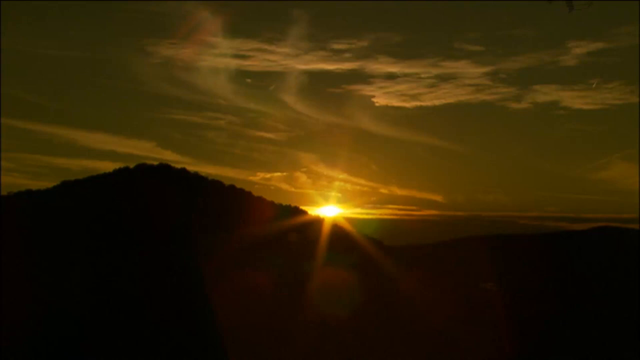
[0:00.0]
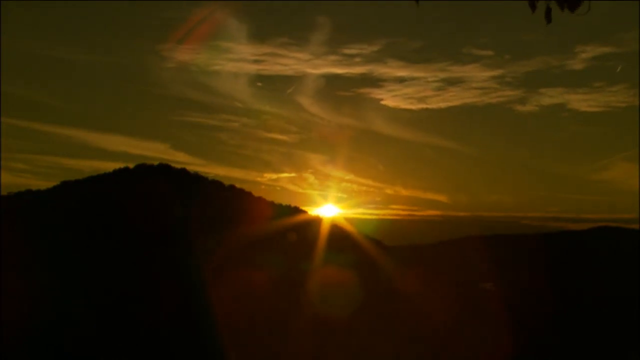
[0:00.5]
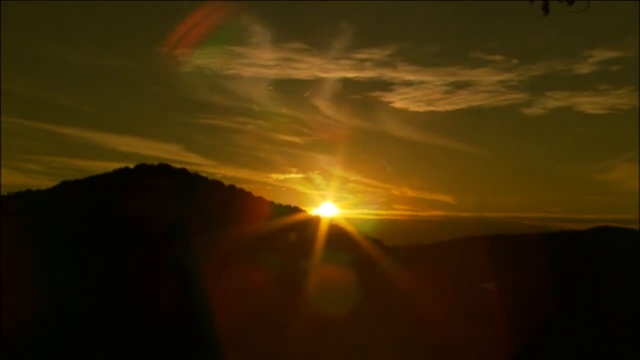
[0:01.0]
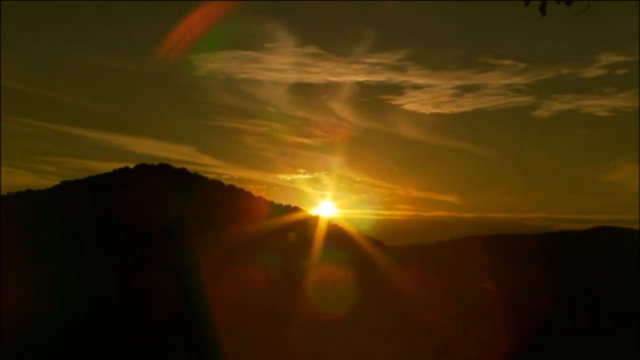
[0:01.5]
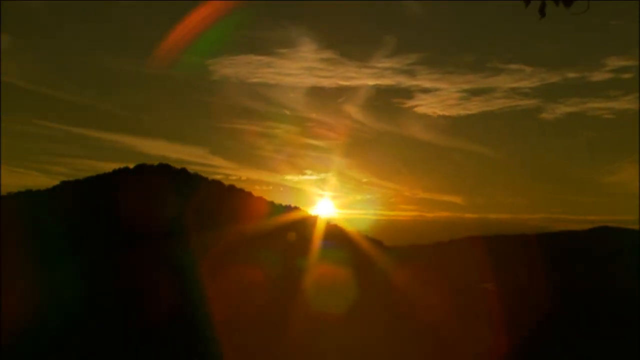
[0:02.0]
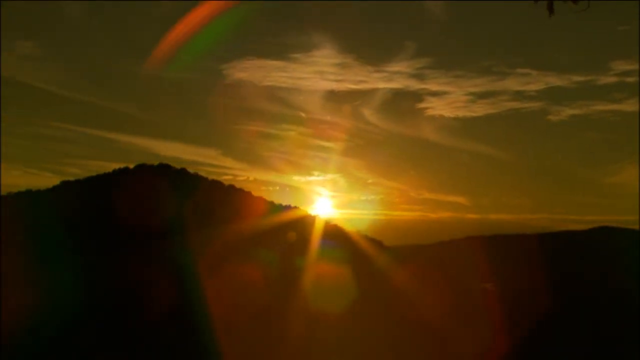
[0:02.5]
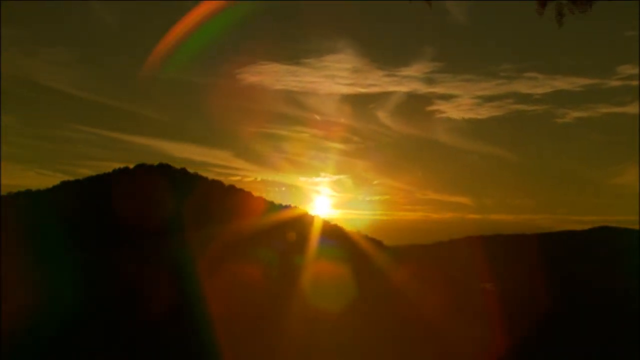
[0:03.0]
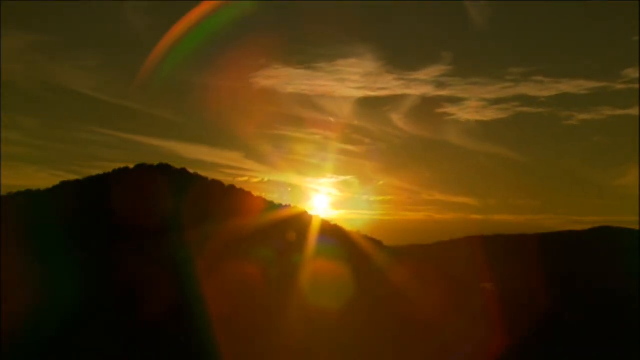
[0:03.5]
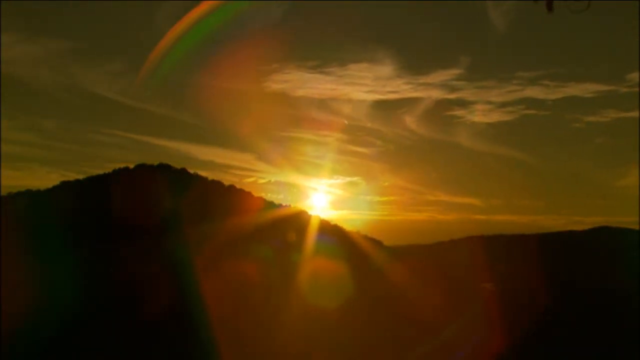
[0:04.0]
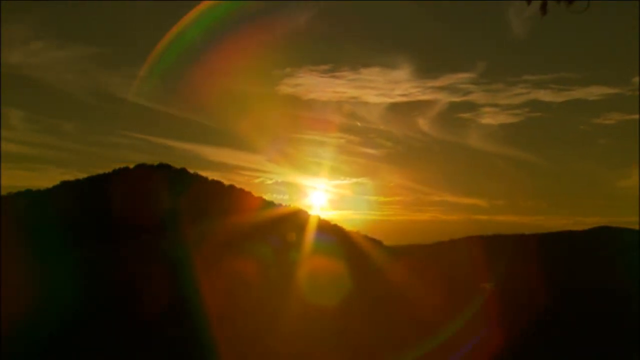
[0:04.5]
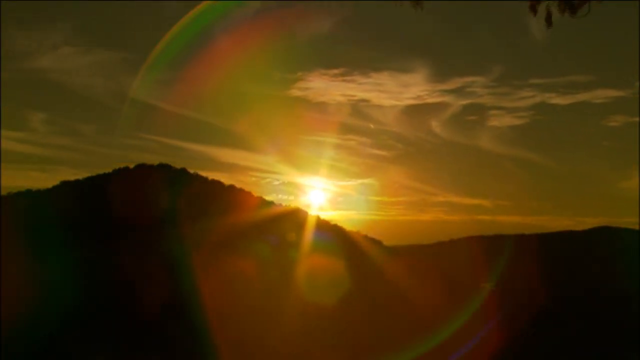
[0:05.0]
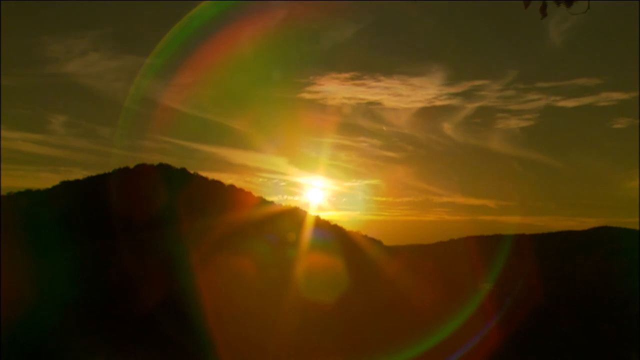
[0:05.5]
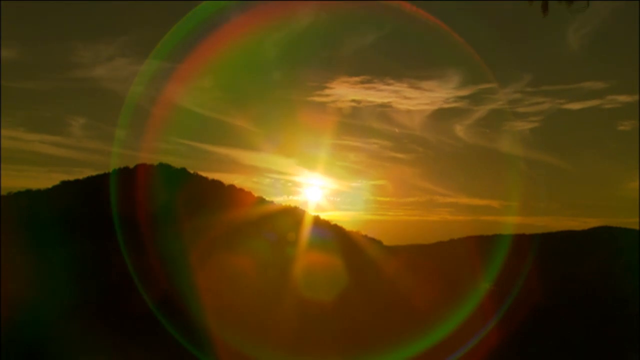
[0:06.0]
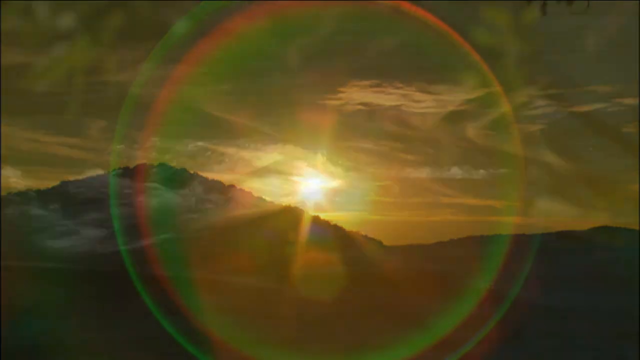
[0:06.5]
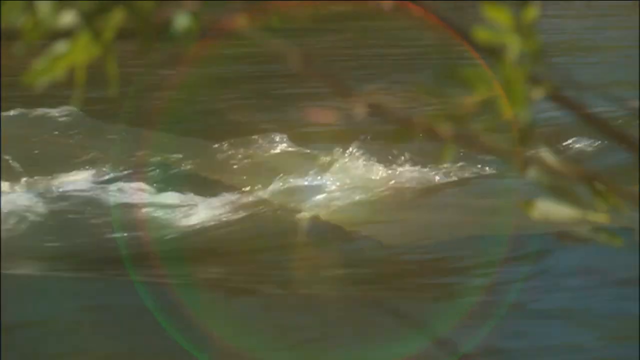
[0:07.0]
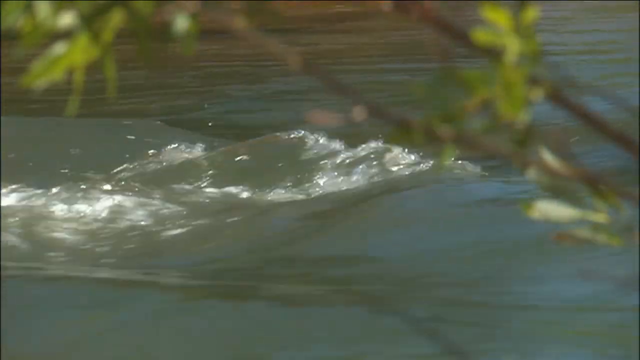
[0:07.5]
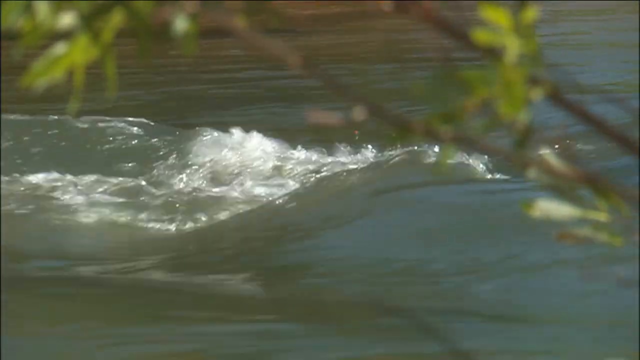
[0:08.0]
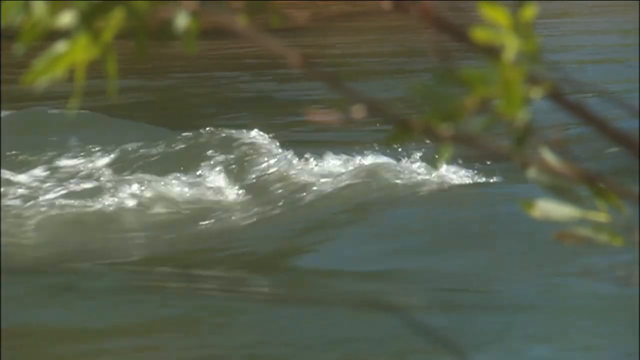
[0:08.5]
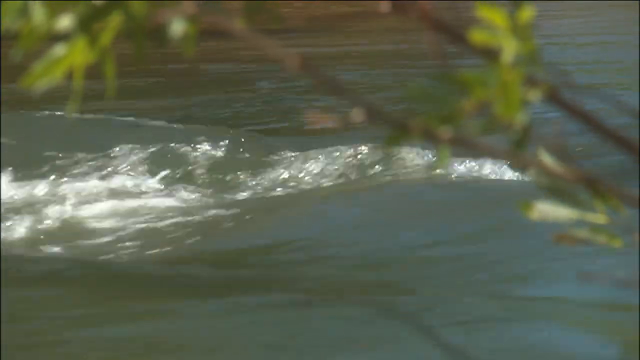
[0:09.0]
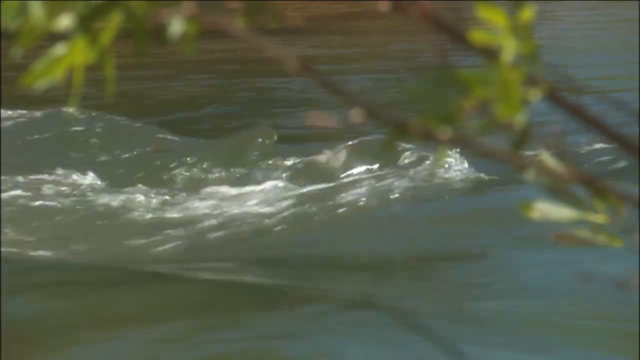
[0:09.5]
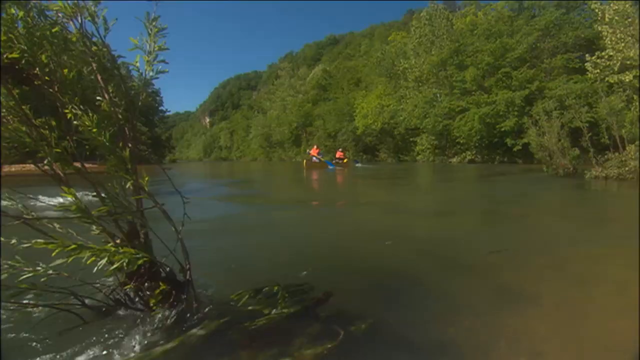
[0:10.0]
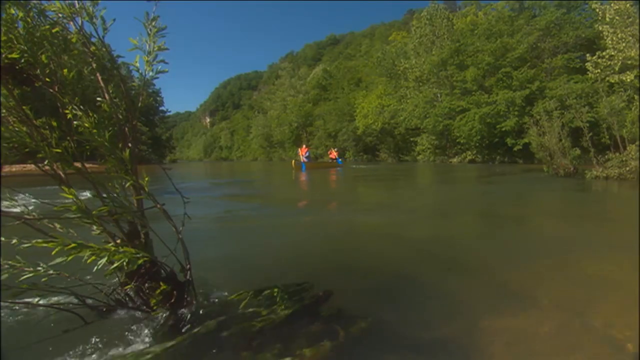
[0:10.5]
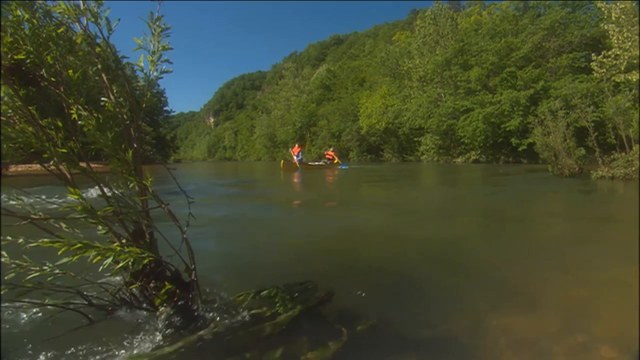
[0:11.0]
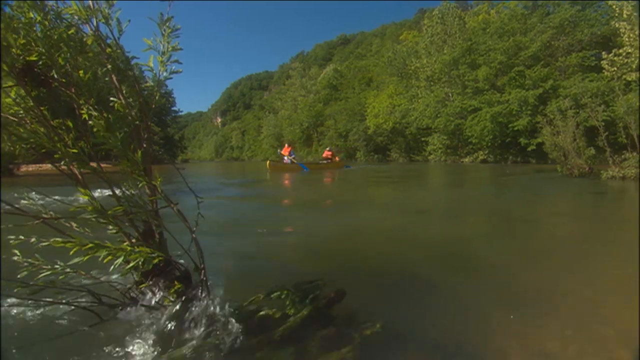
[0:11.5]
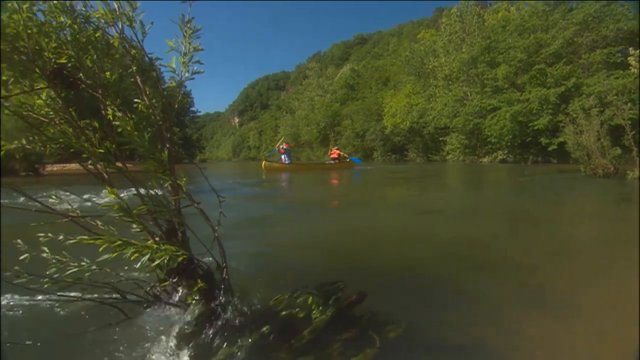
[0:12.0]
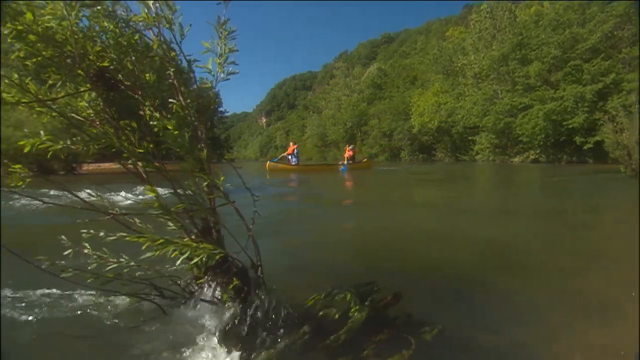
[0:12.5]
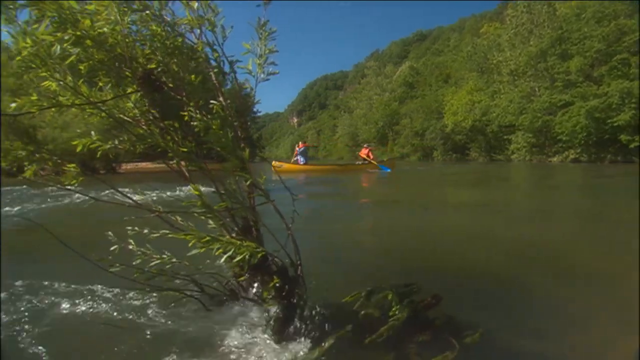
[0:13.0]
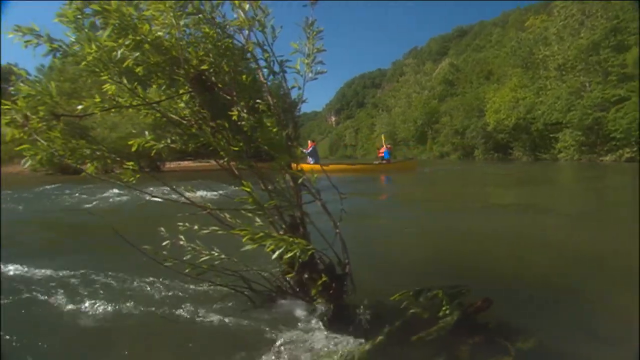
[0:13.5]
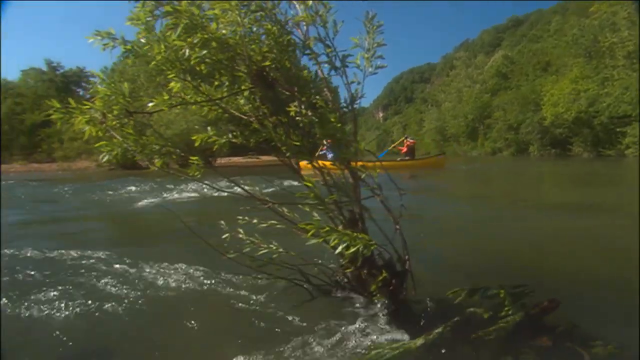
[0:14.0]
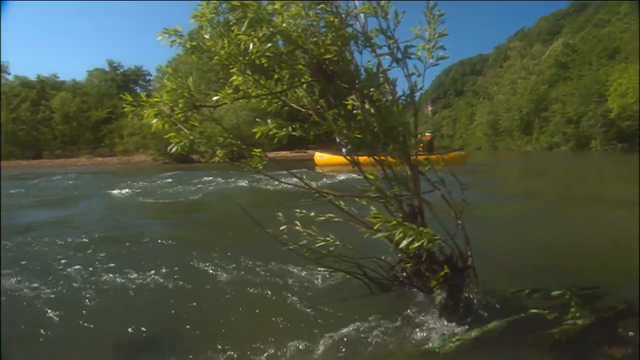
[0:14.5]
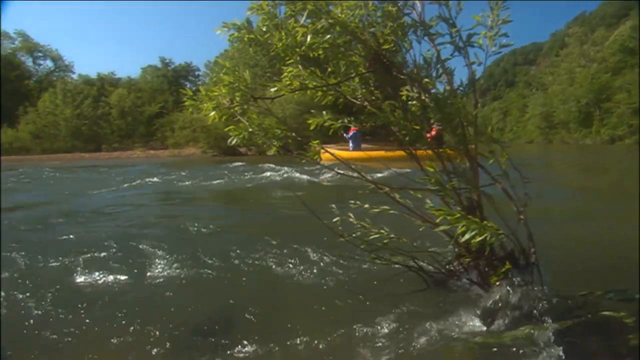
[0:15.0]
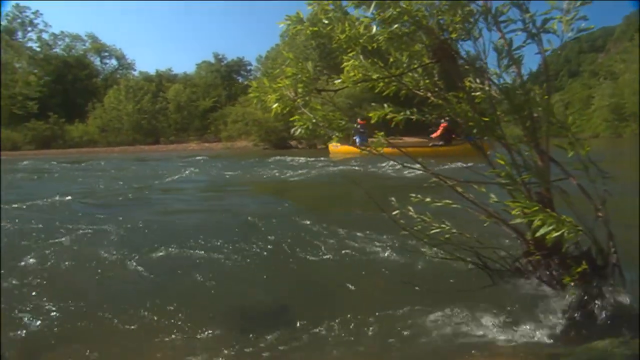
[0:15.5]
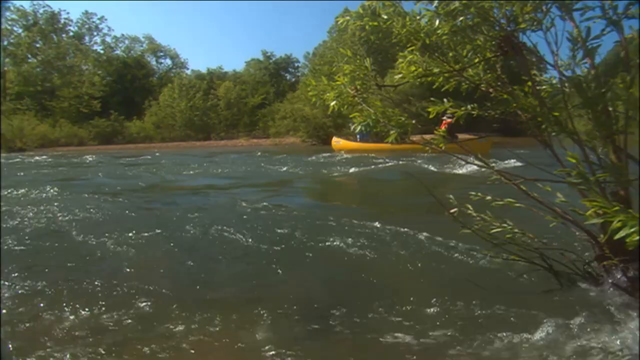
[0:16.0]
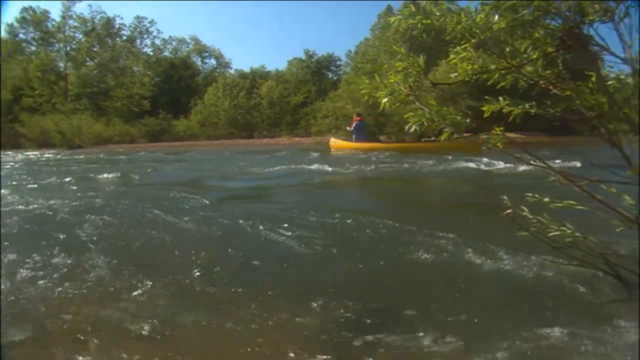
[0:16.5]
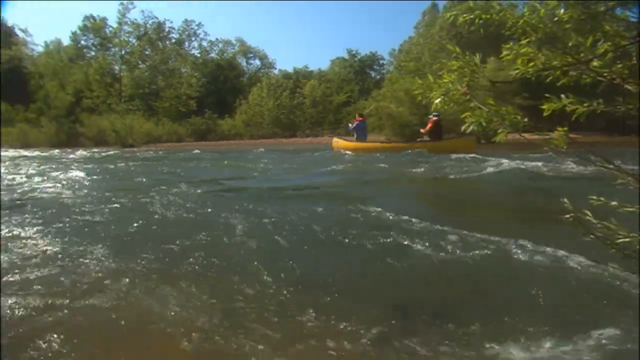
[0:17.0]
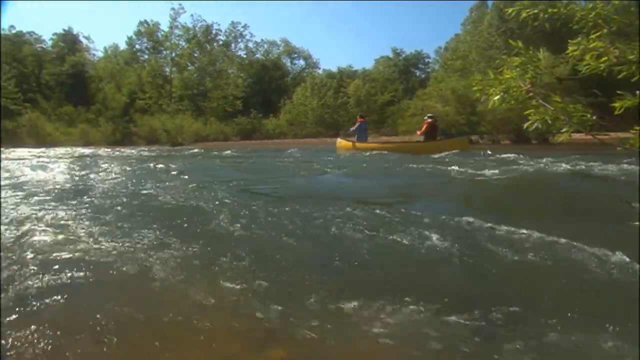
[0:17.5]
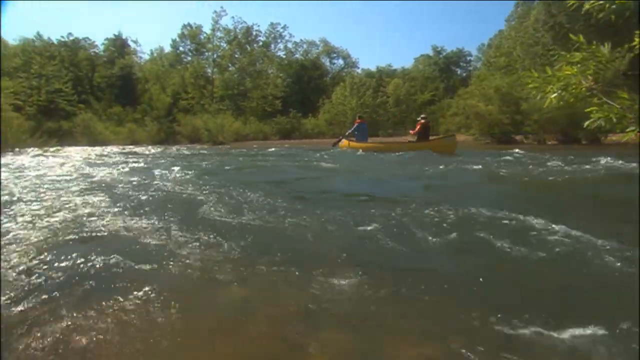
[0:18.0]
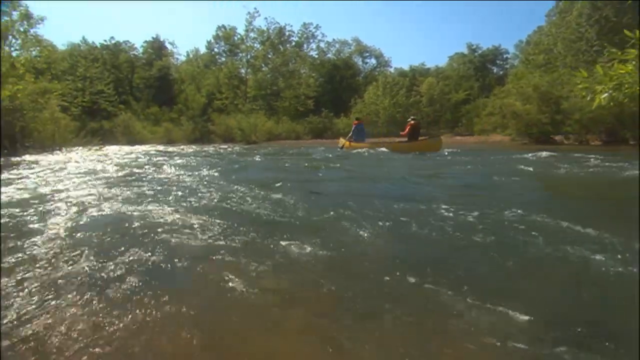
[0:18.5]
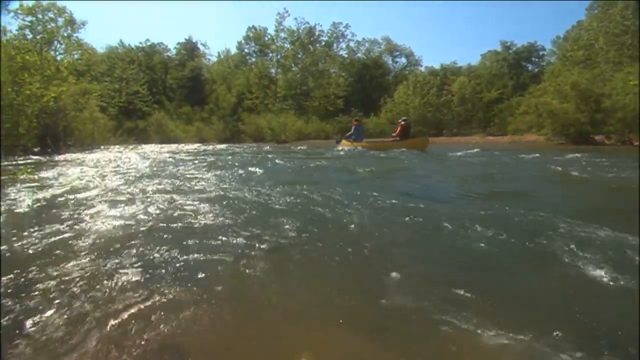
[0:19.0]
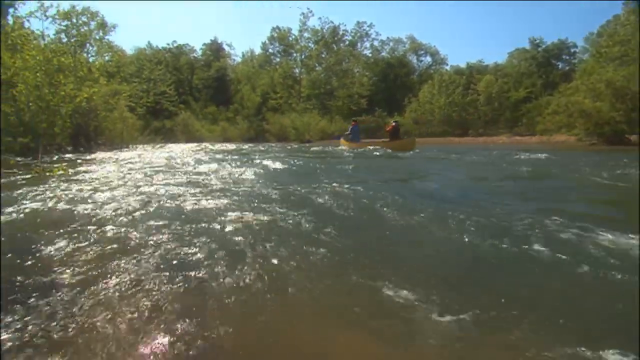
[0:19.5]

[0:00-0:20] A mountain view appears with the sun rising at dawn under a sky full of scenery. Then a body of water with a visible current comes into view. Two people in one yellow canoe, both wearing black jackets, paddle downstream along a river. Many green trees line the view, the skies are blue, and it is daylight. The water is greenish-blue, not very clear but not brown either.